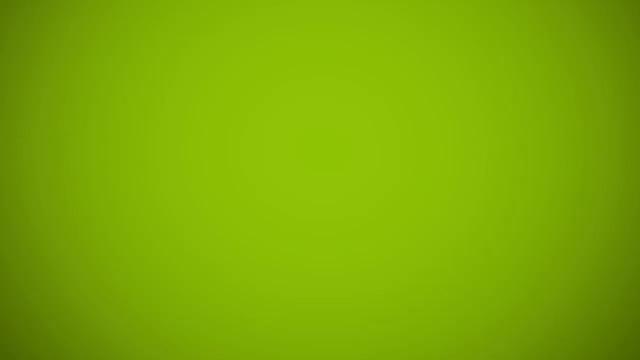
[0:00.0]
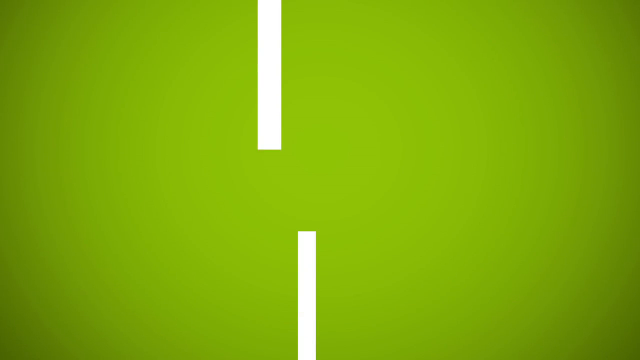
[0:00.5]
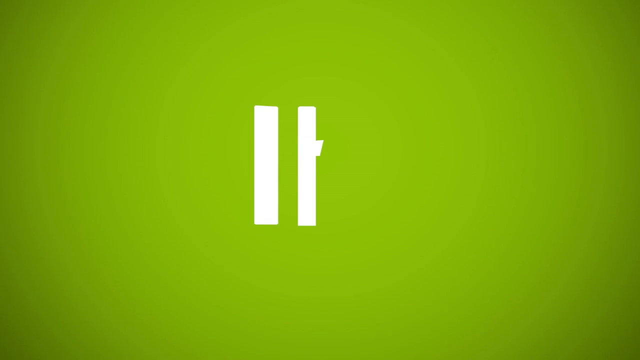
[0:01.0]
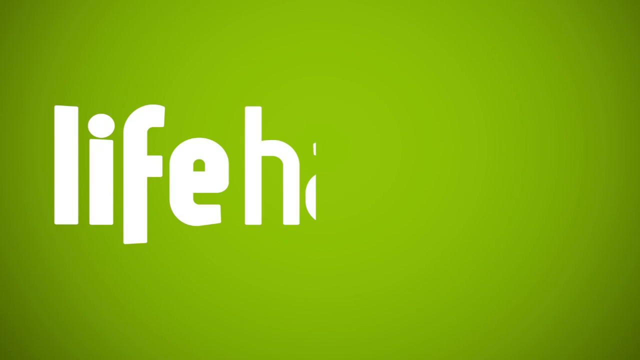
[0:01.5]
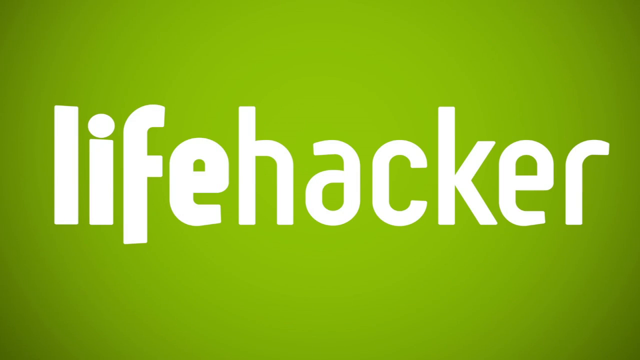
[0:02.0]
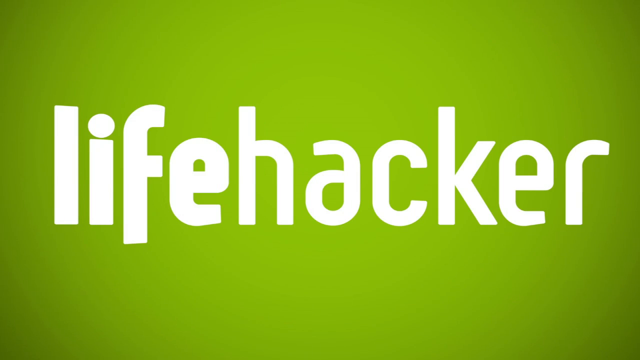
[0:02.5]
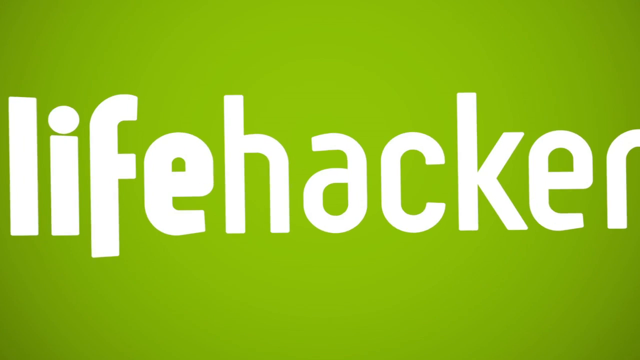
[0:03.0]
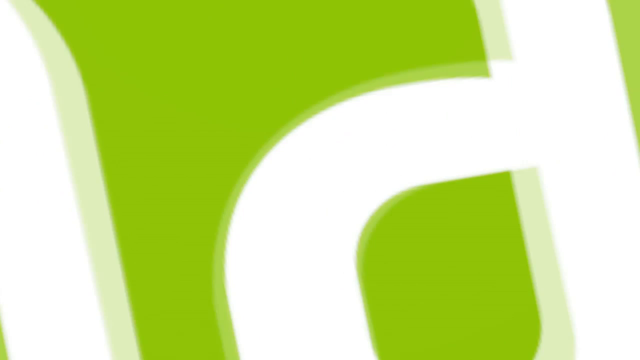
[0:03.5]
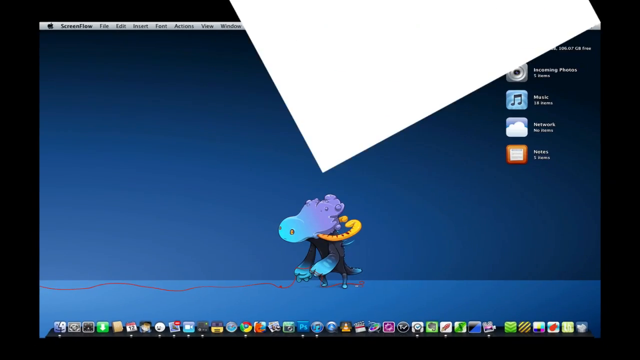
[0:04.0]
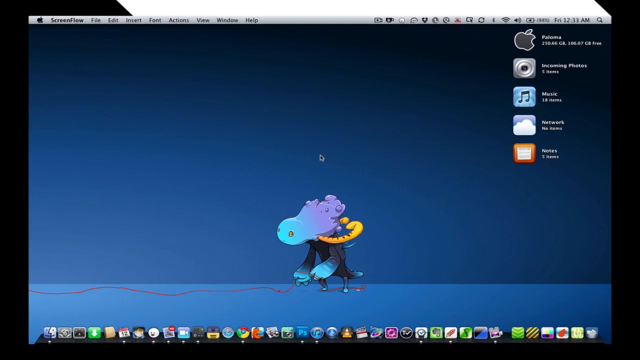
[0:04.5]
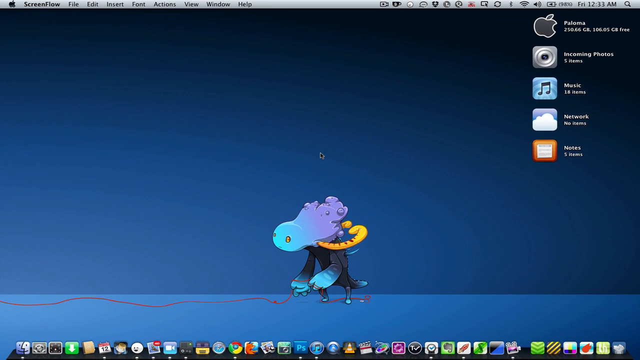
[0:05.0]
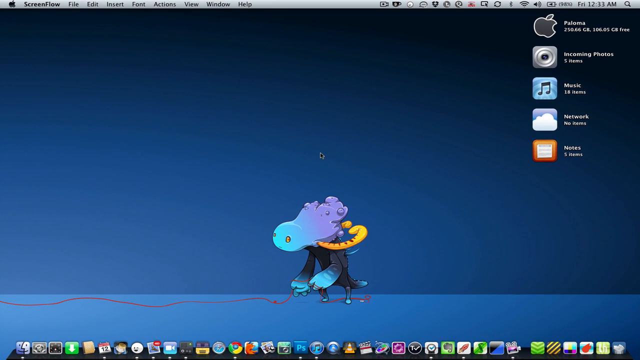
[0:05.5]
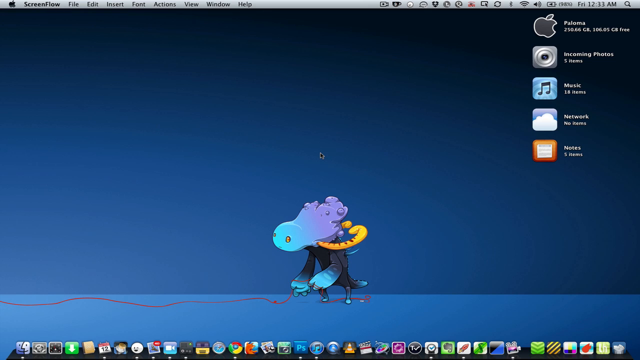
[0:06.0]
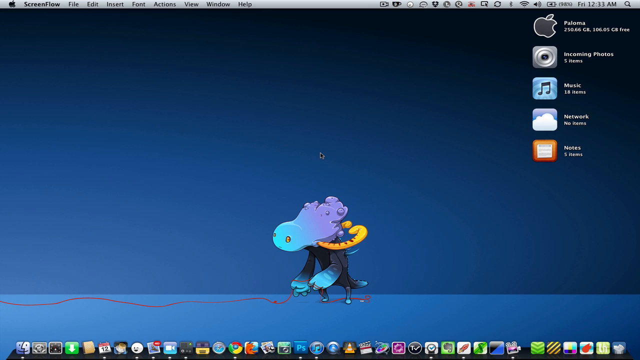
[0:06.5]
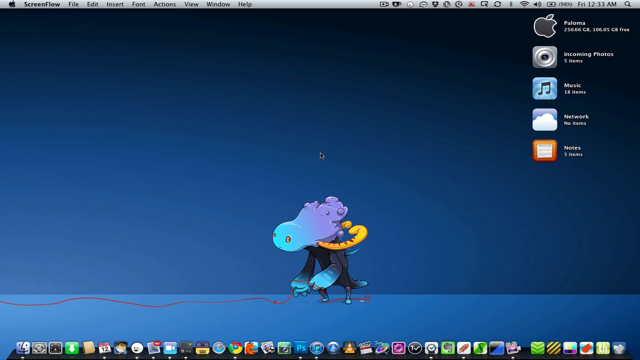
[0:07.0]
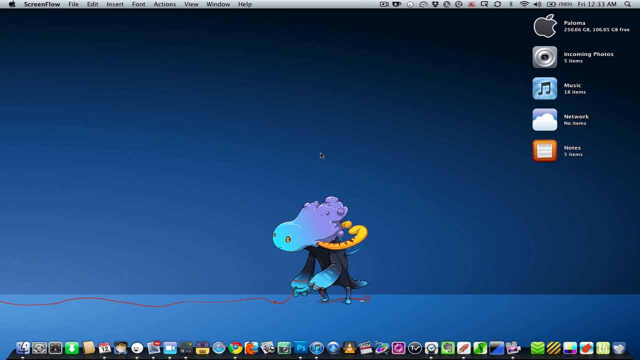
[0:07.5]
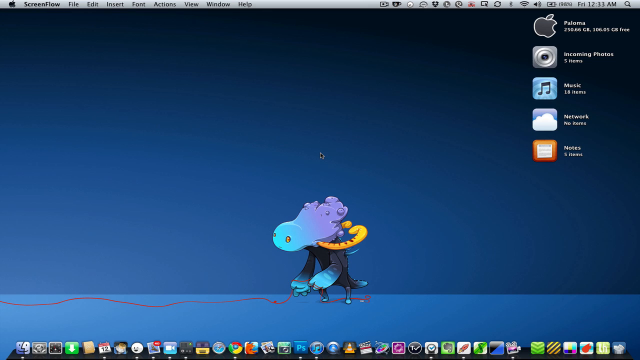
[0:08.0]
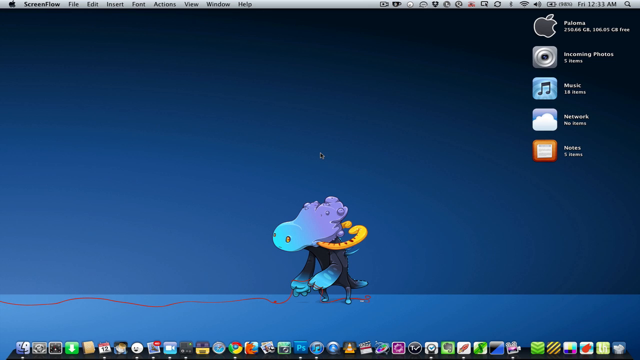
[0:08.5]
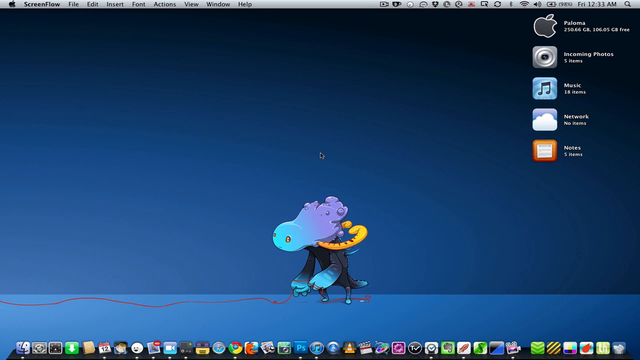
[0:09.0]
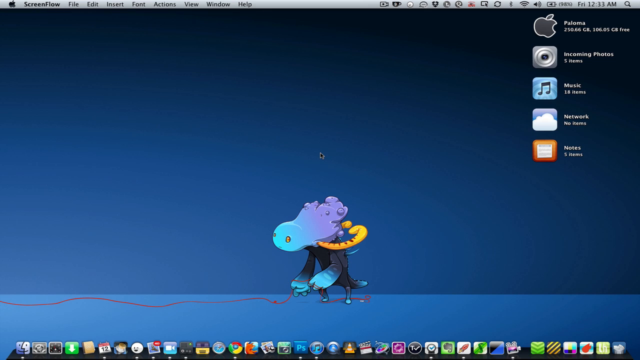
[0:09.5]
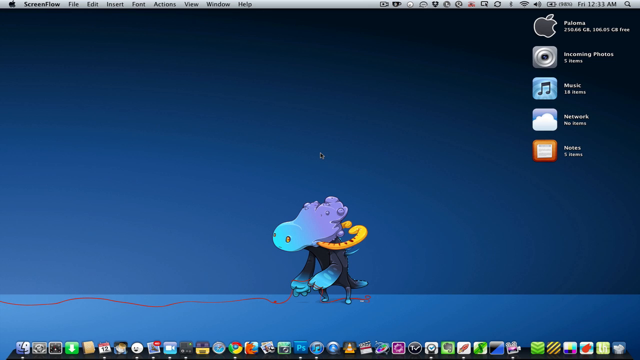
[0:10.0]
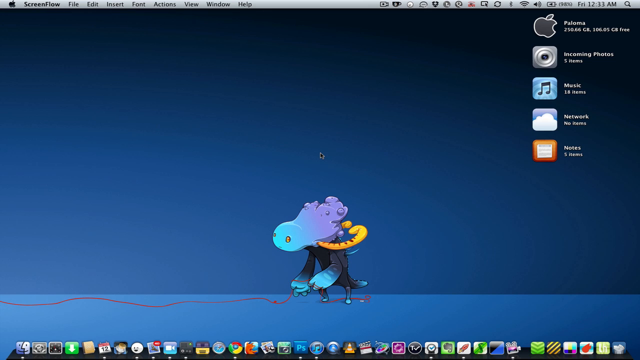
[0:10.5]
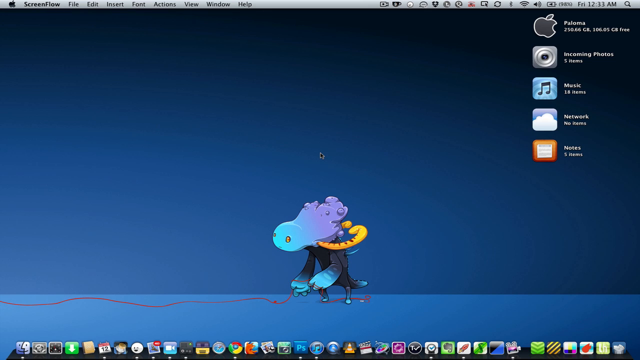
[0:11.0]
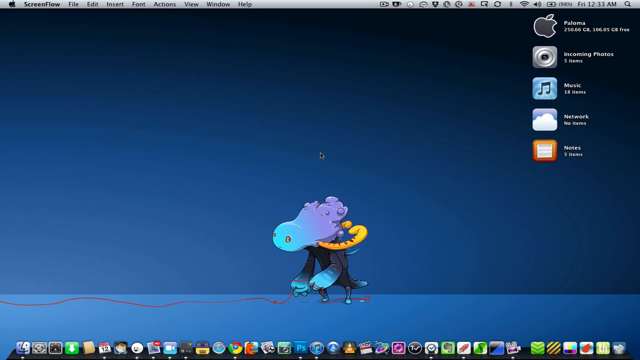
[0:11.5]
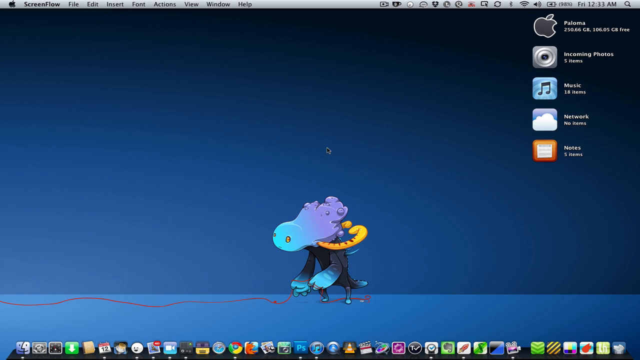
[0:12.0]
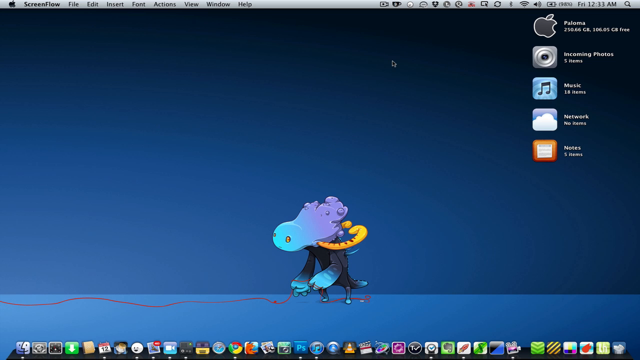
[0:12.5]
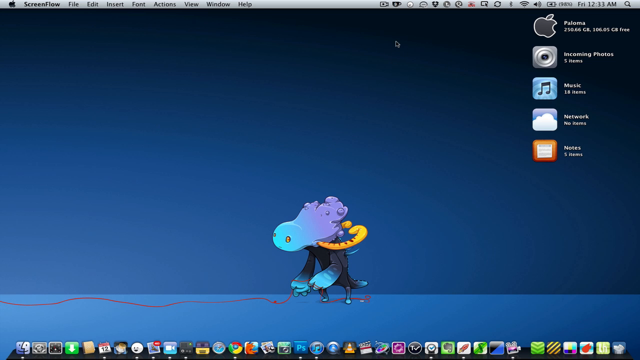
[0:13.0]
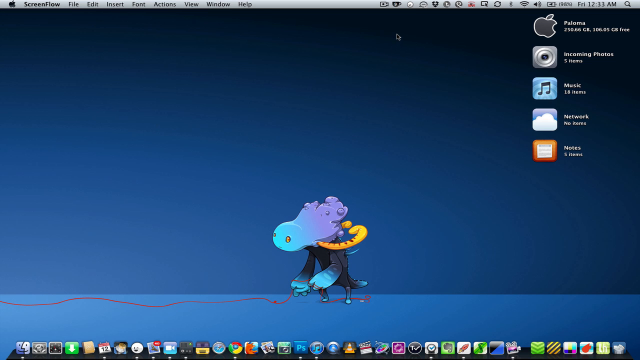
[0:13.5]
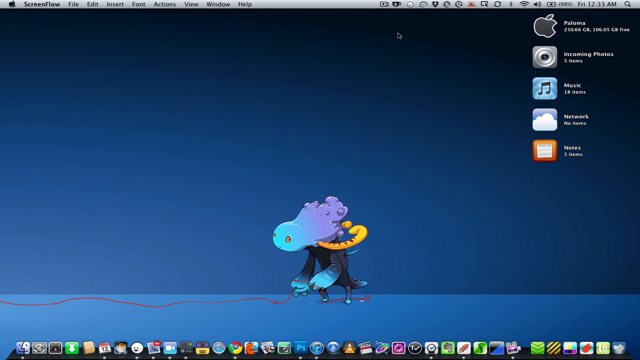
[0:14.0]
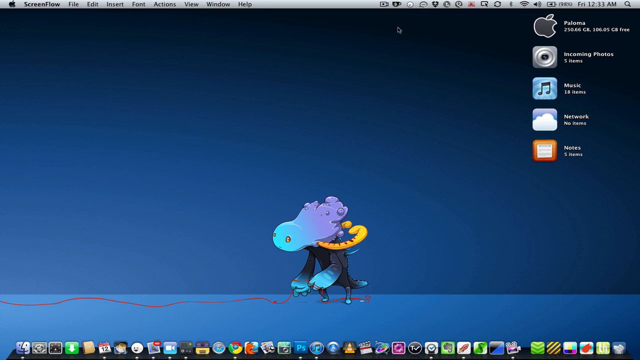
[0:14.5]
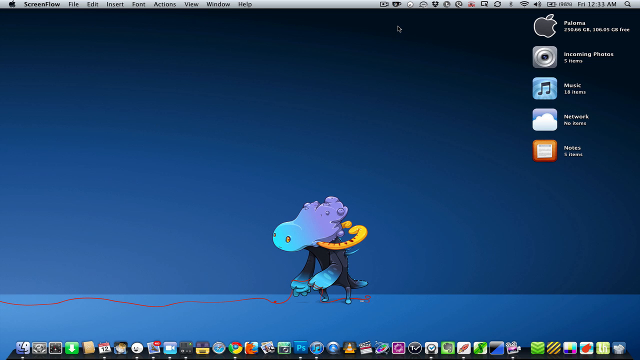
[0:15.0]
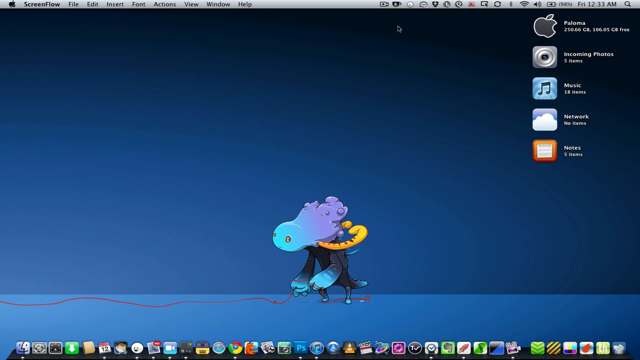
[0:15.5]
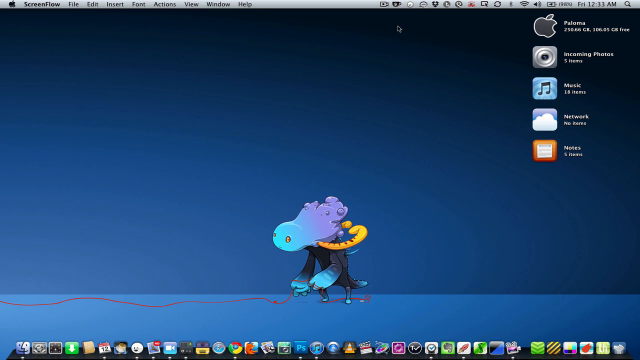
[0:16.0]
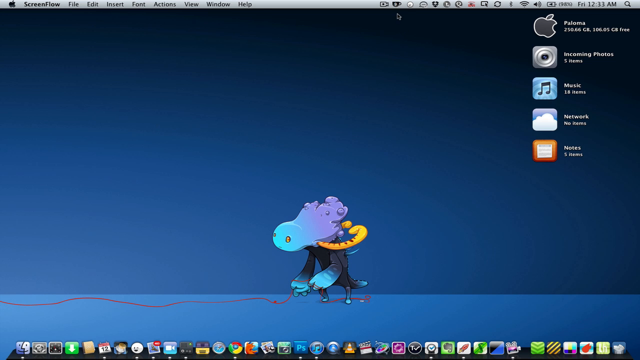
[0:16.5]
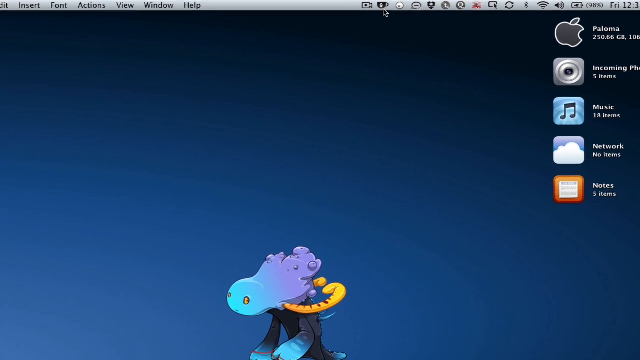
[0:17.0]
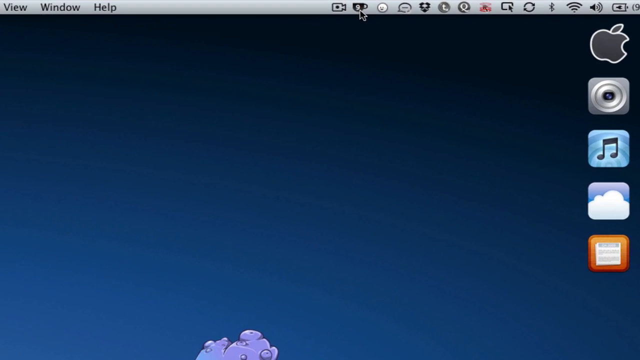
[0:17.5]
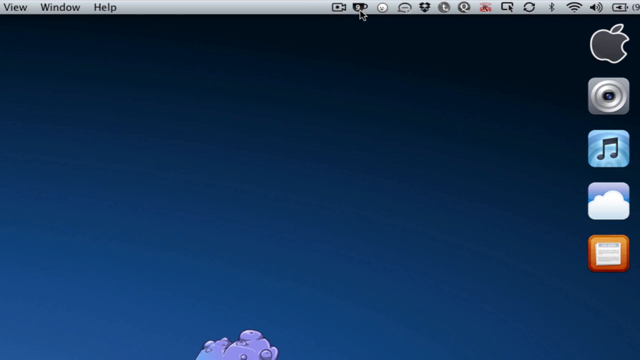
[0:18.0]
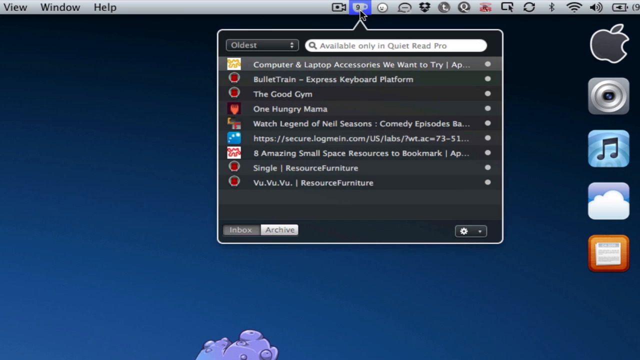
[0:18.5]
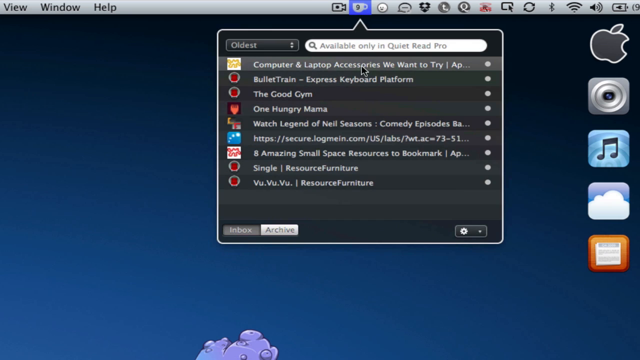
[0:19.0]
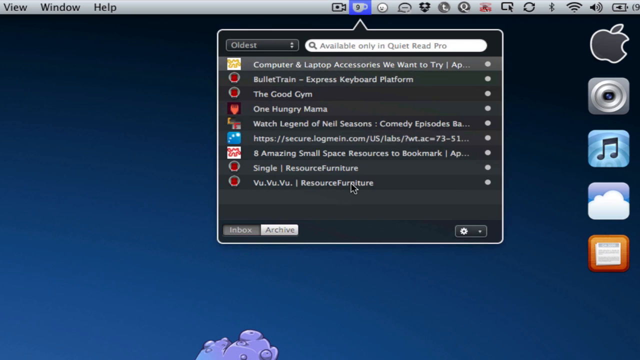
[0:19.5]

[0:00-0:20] The video opens with the words "life hacker". It then shows a computer screen with a whole bunch of different apps on it. A small mouse pointer moves around and clicks on something labeled "resource" something.